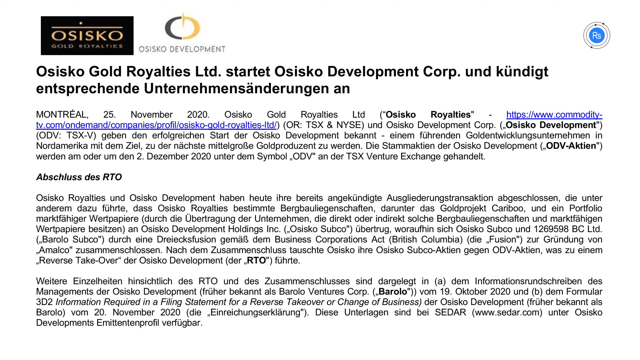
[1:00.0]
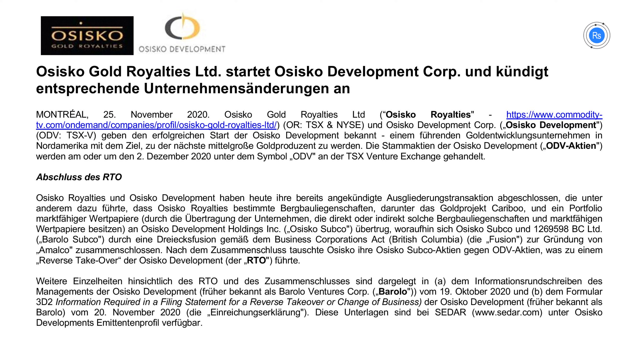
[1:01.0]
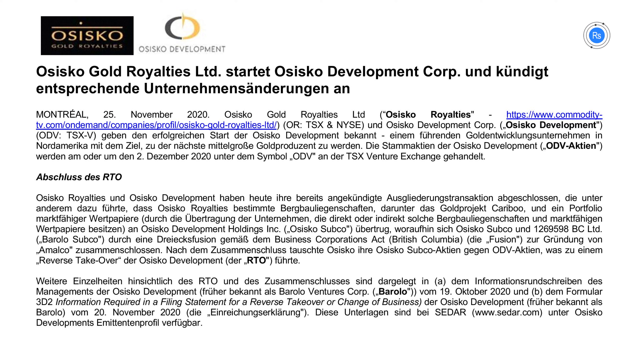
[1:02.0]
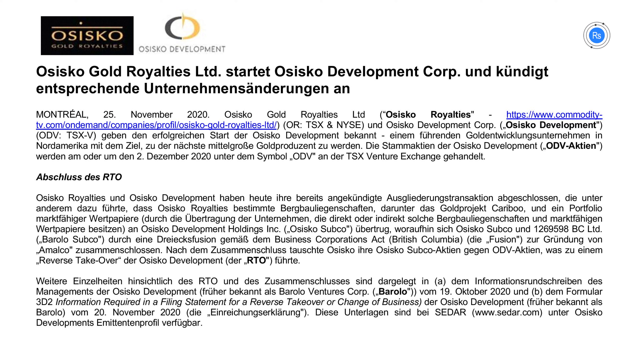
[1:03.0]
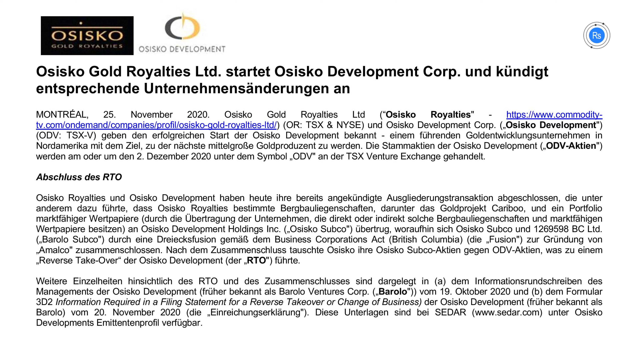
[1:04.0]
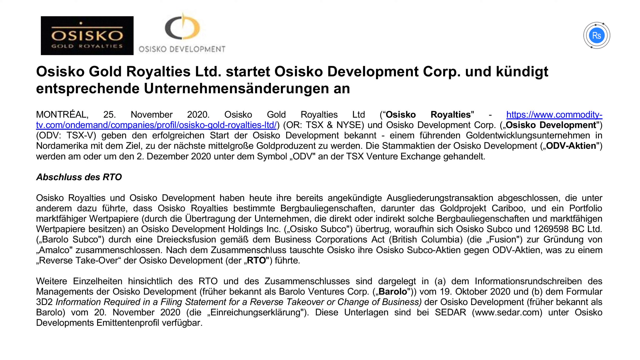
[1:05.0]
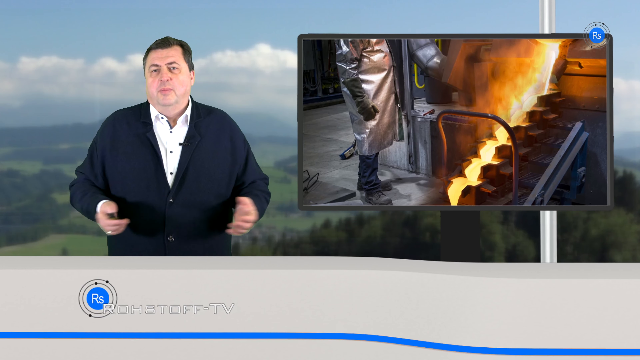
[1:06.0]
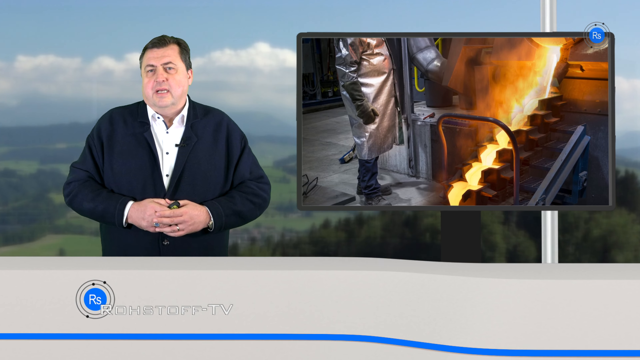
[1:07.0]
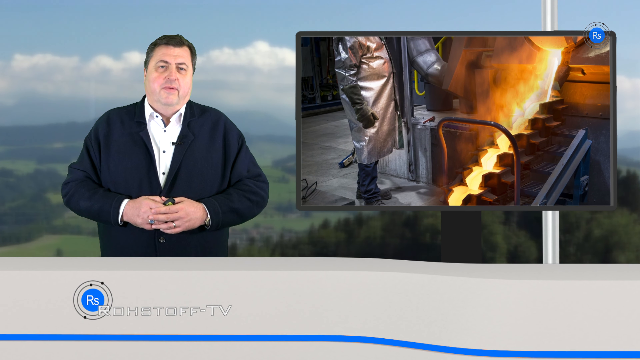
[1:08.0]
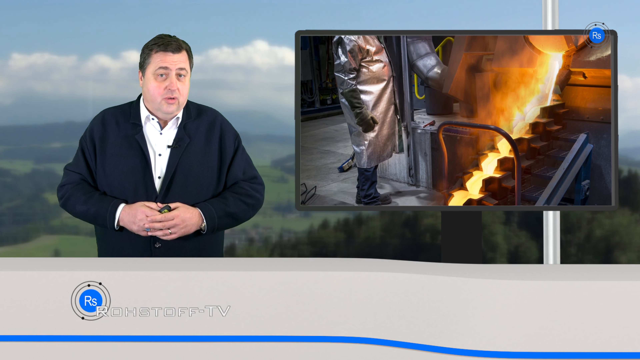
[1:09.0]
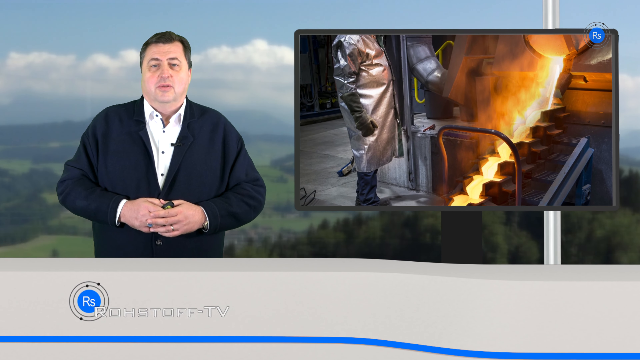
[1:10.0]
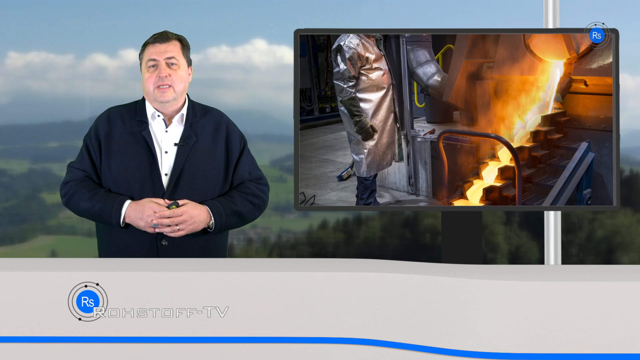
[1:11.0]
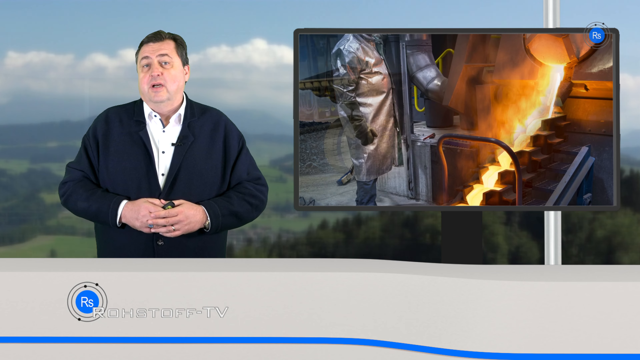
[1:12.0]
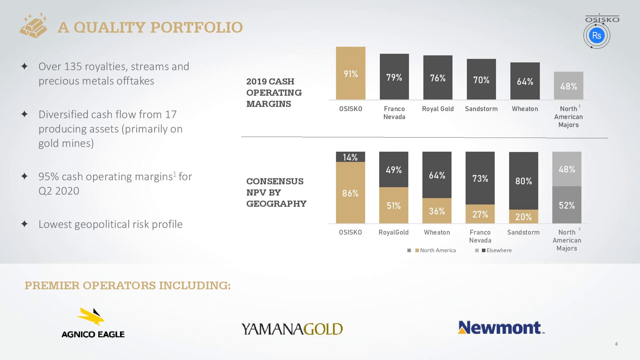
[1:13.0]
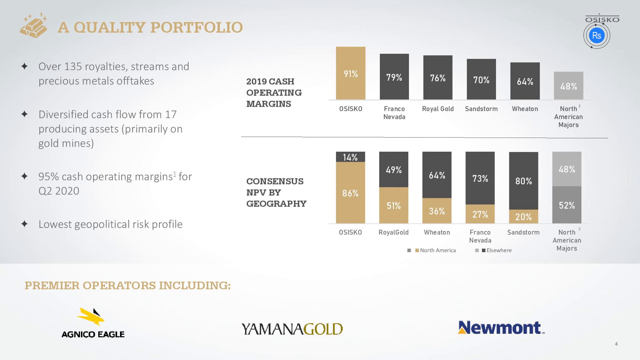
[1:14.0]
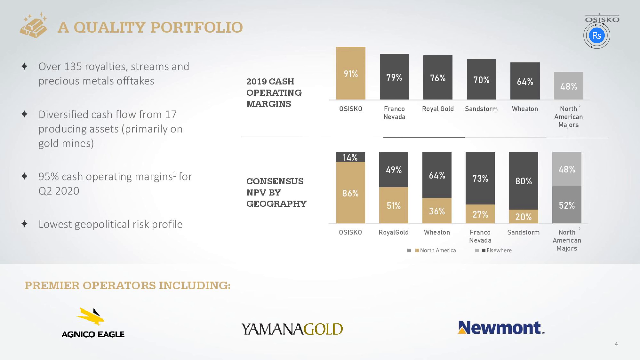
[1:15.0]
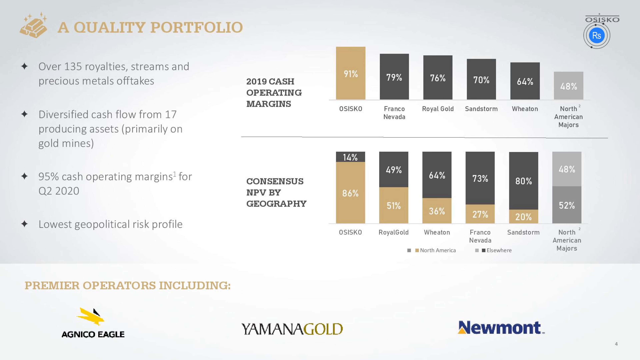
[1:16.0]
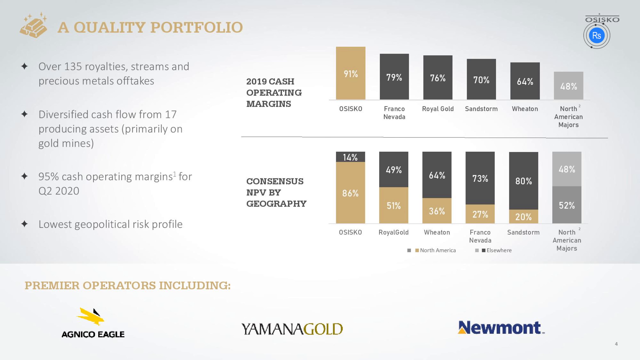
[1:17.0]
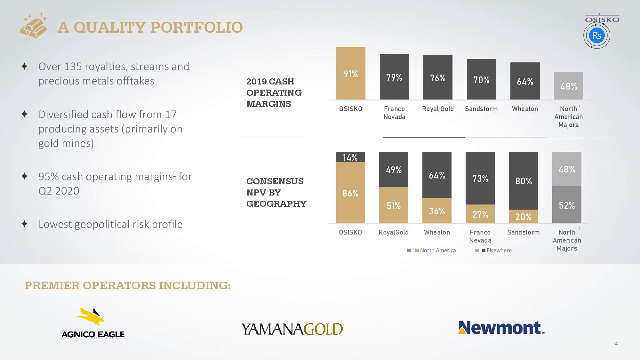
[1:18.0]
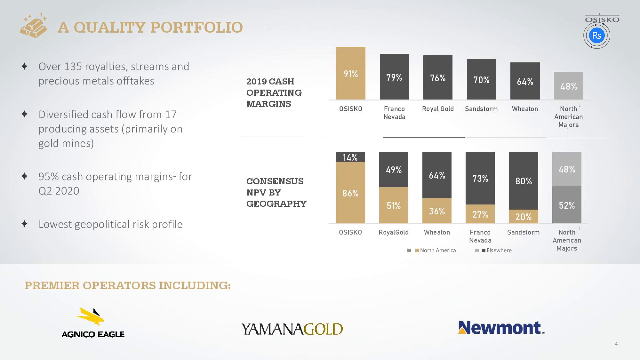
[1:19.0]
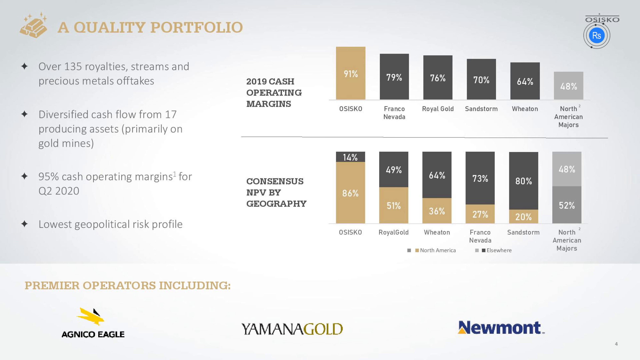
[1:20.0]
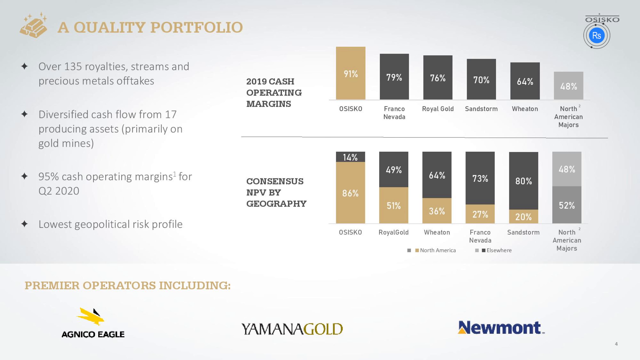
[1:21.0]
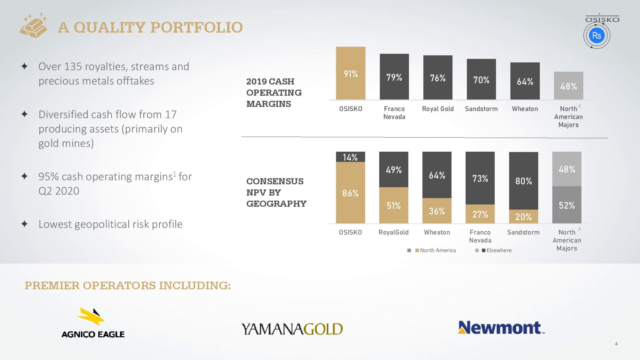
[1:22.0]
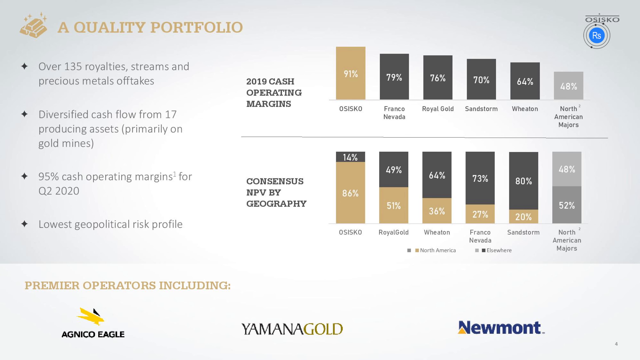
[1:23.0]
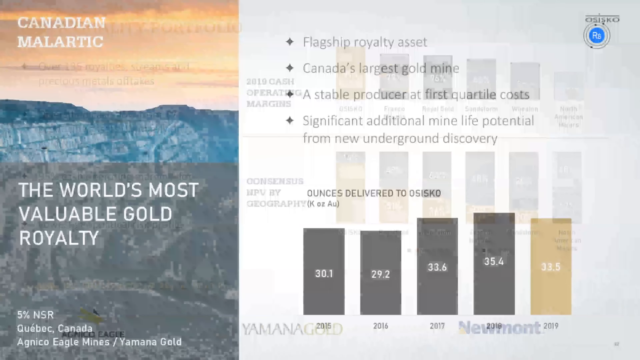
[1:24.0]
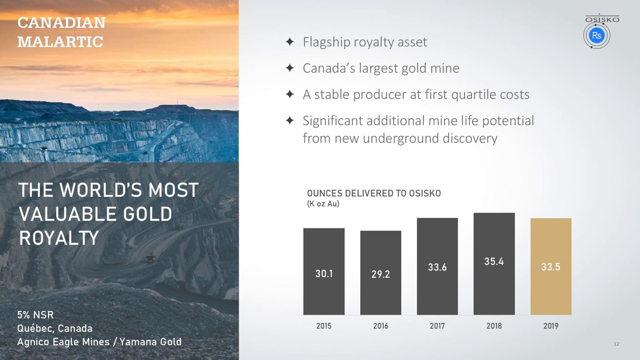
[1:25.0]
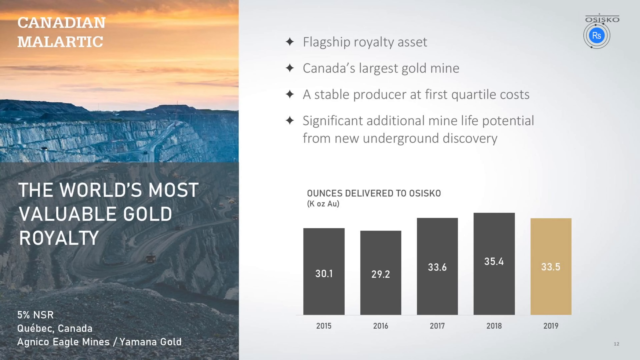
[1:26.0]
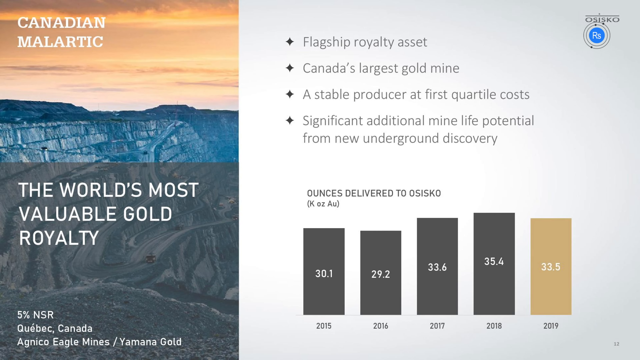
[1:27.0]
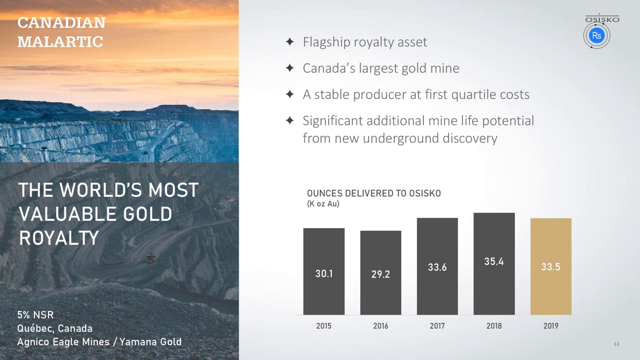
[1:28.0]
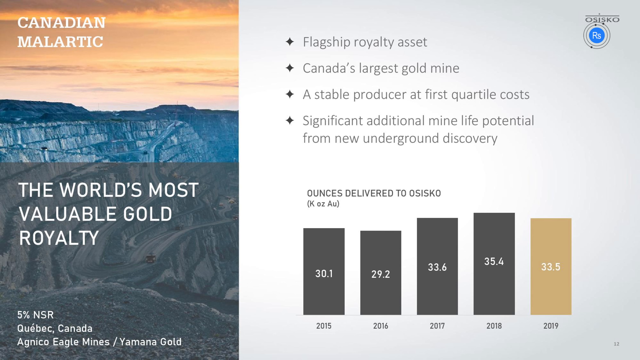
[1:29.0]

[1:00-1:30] The document continues, most of it in a language the viewer cannot read, with the company's establishment date, November 25, 2020, visible. Then a building appears, followed by a picture of someone melting something in fire, like in a warehouse. A quality profile is shown, mentioning over 135 royalty streams and precious metal offtakes and a 2019 cash operating margin, with Osisko at about 91% and Franco at about 79%. Cash flow from 17 producing assets, primarily in gold mining, is also mentioned.